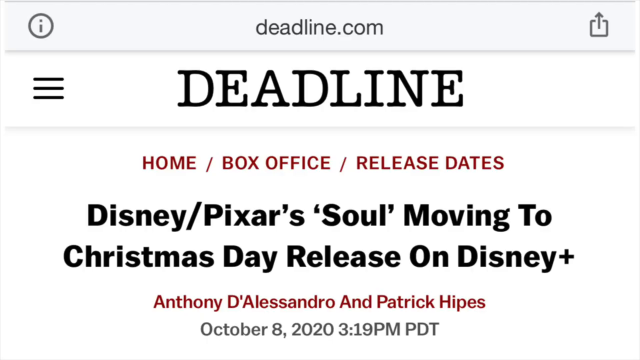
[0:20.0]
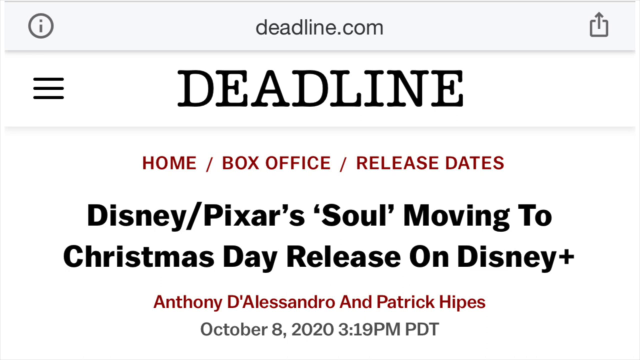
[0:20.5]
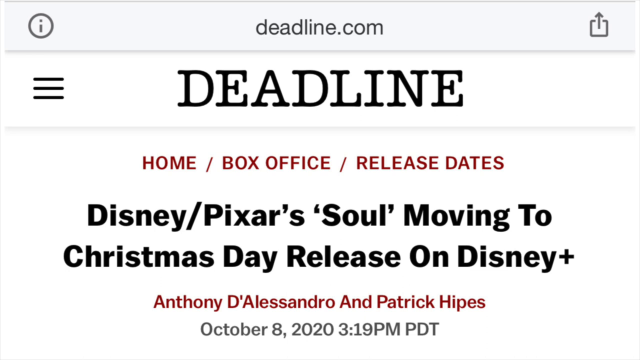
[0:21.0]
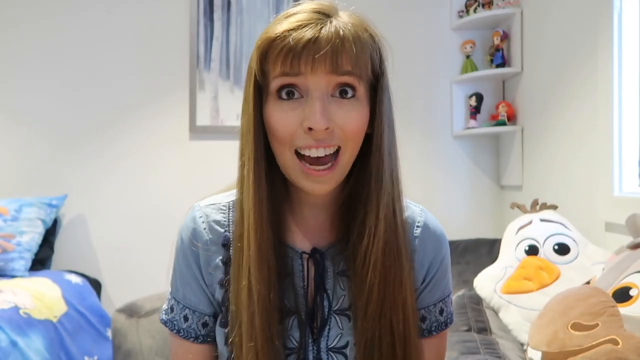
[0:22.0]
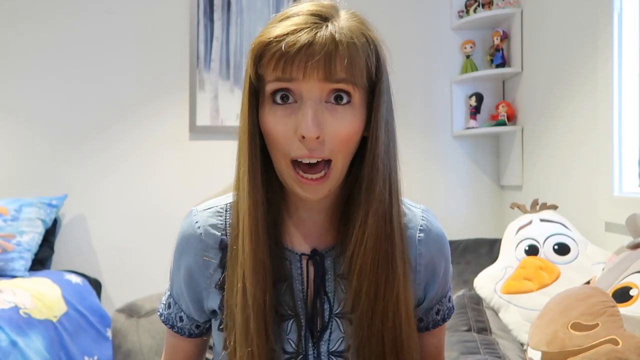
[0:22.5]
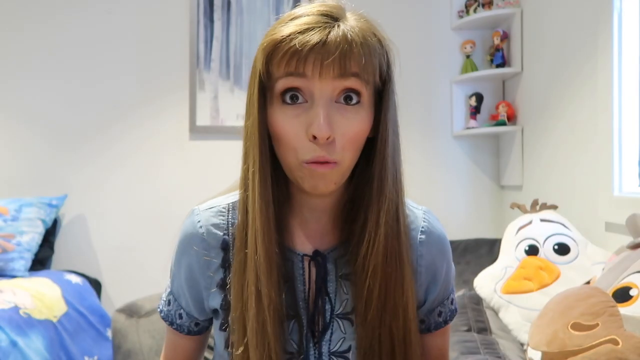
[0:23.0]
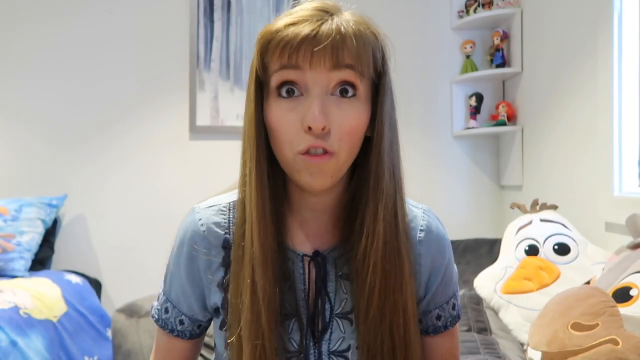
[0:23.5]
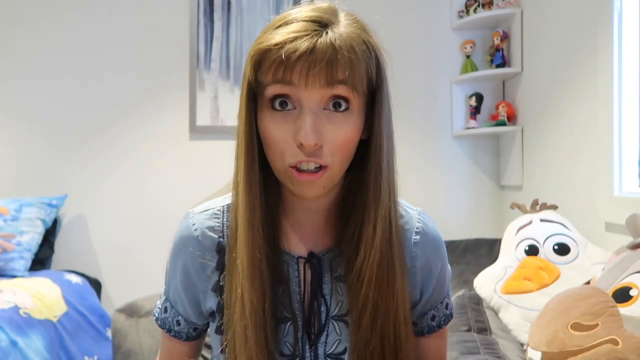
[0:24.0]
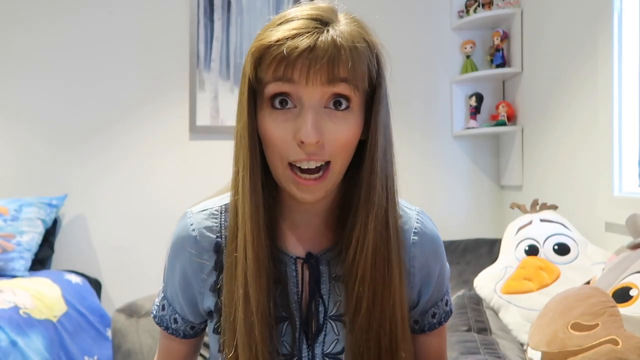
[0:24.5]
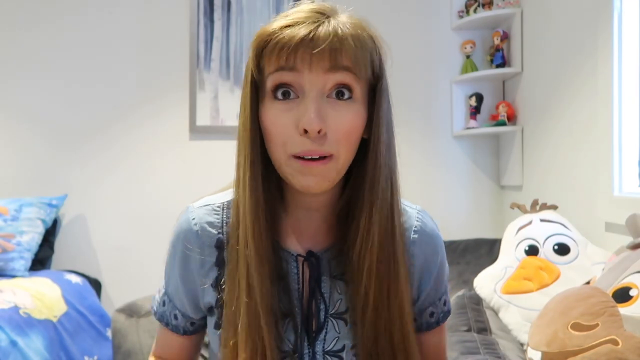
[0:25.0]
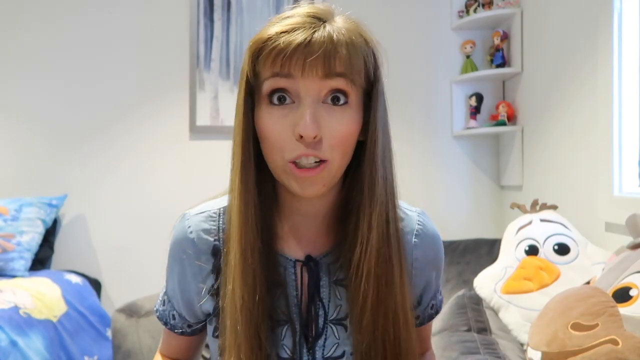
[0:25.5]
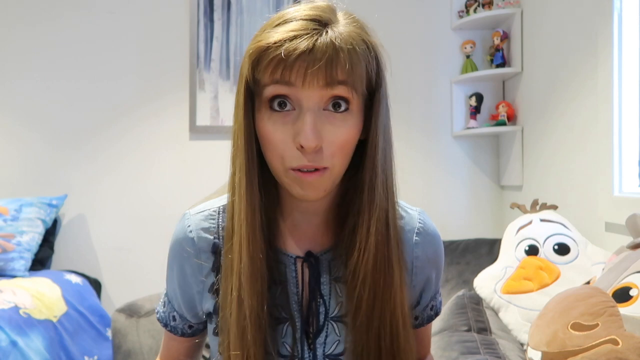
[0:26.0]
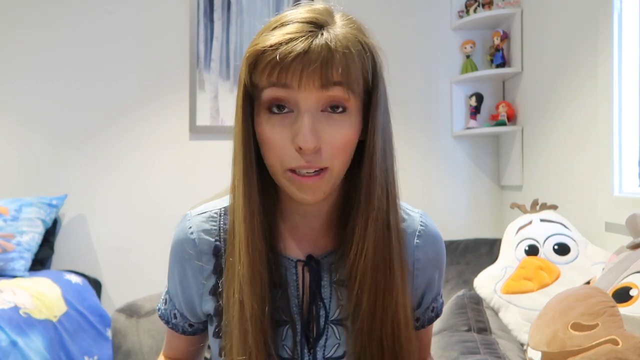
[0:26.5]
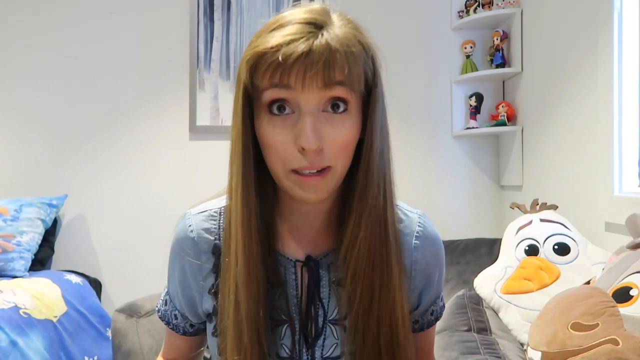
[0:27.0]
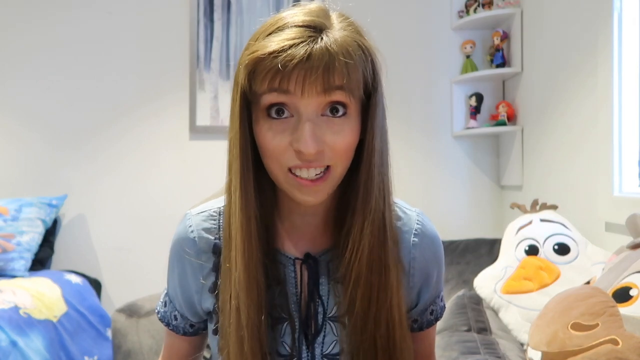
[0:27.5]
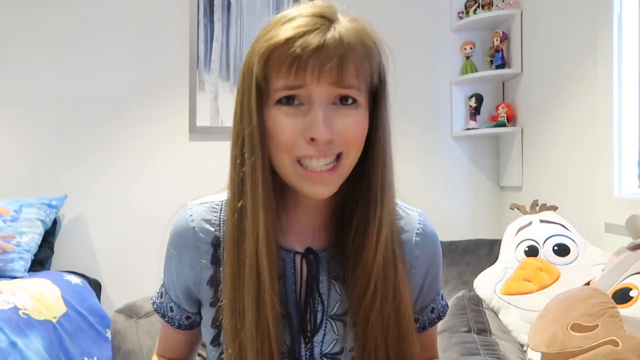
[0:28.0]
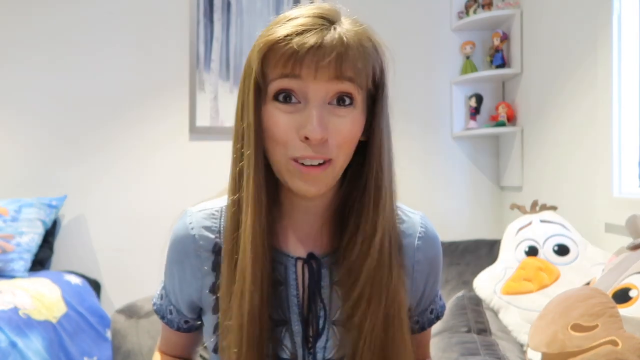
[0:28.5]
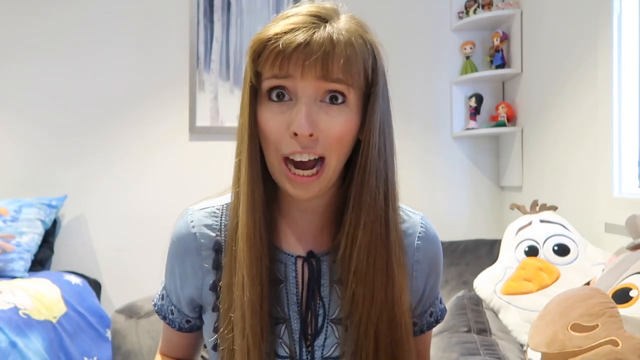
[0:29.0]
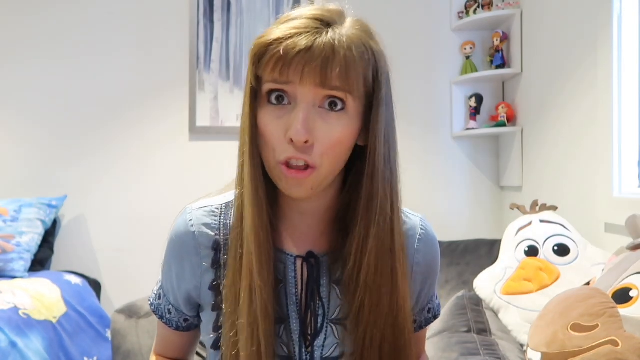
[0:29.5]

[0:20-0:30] The words "deadline Disney/Pixar's Soul moving to Christmas Day release on Disney Plus" are on the screen. The woman with long straight hair then speaks very enthusiastically in her bedroom, which has white walls and figurines on the shelf. The same words appear again, and then the woman continues talking enthusiastically. On the shelf to the right are a variety of figurines, all different from each other, though a bit blurred. On the right of the screen is some type of bird, maybe a stuffed animal, and on the left of the screen is a bed. The woman wears a blue top and opens her eyes very wide as she talks enthusiastically.